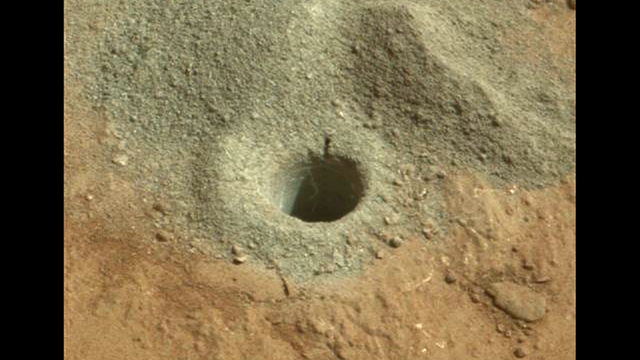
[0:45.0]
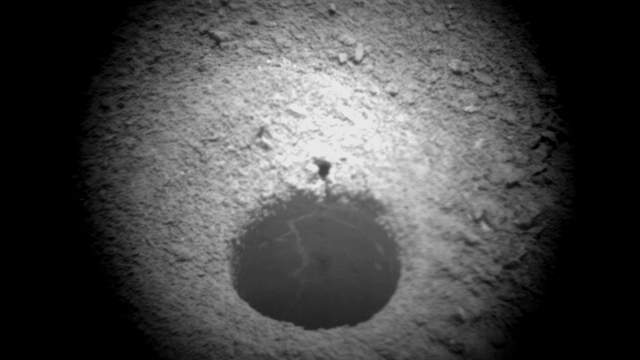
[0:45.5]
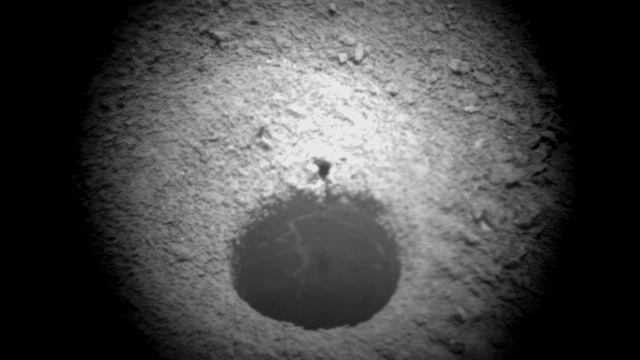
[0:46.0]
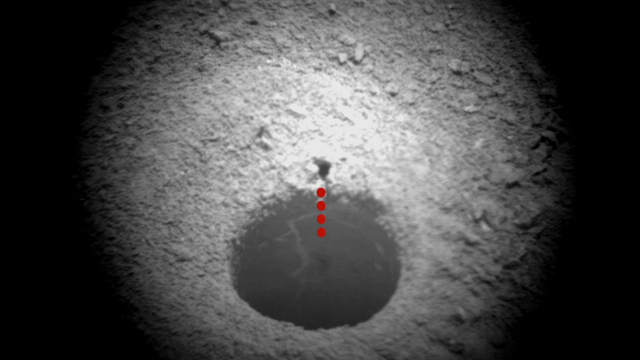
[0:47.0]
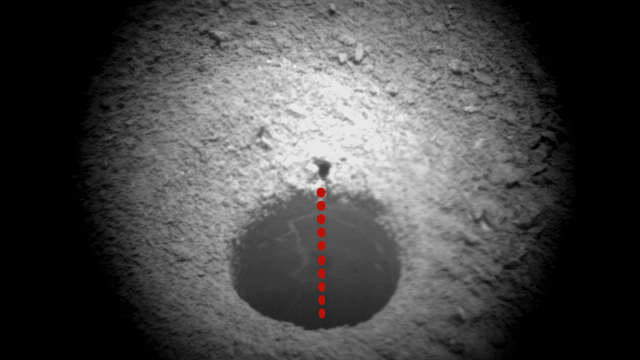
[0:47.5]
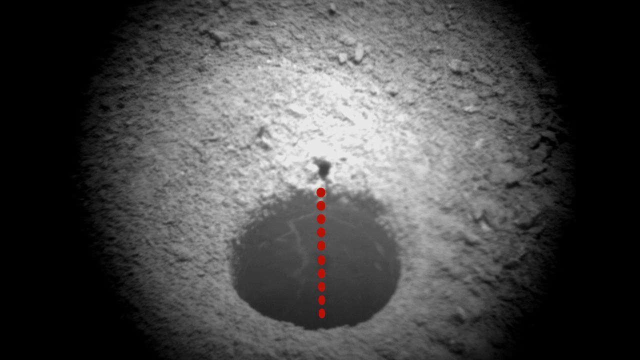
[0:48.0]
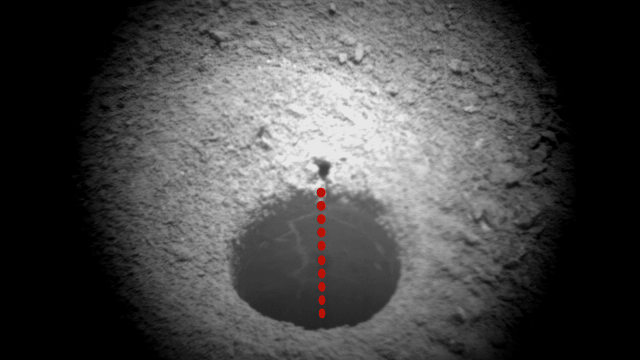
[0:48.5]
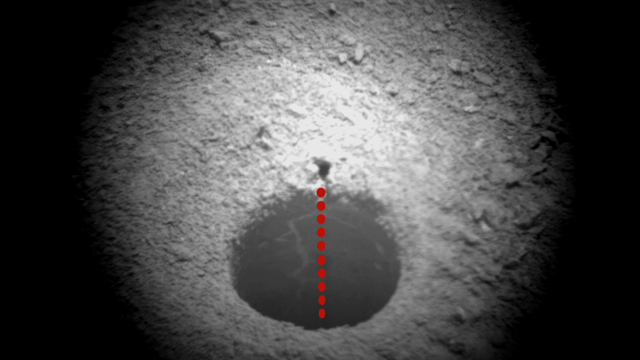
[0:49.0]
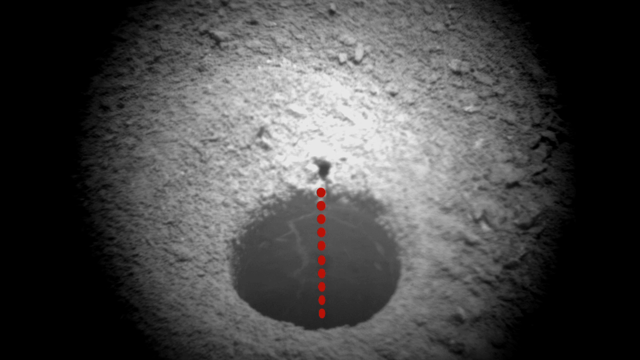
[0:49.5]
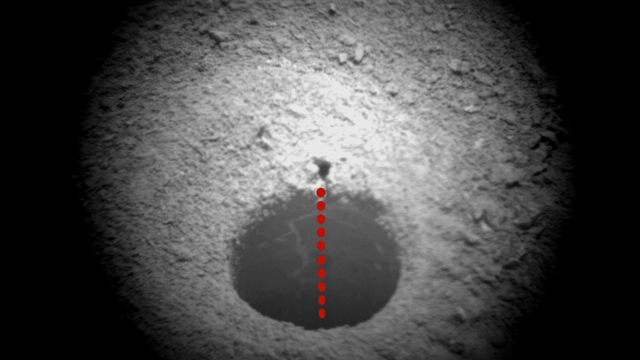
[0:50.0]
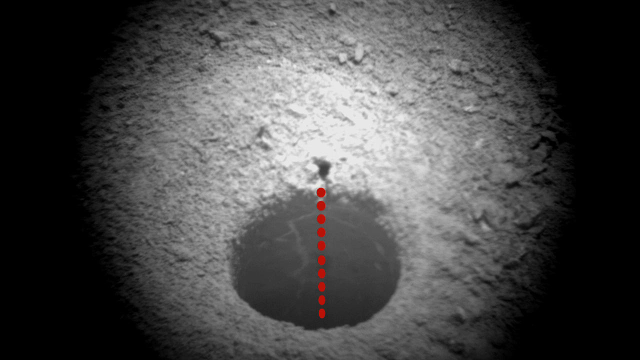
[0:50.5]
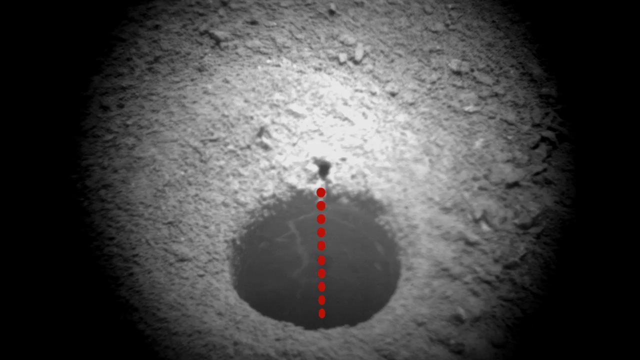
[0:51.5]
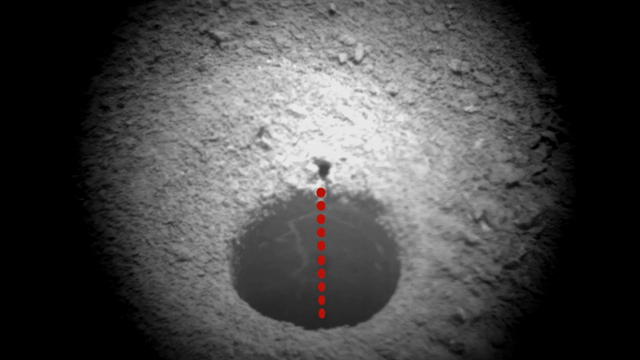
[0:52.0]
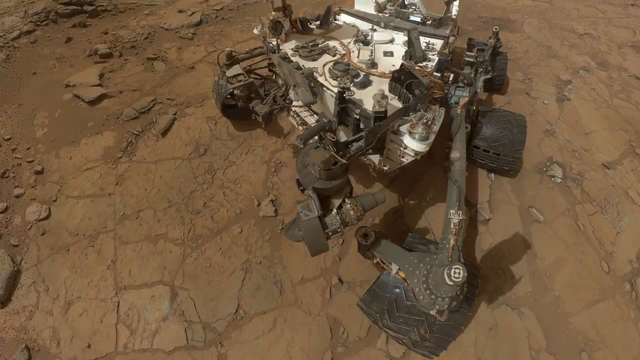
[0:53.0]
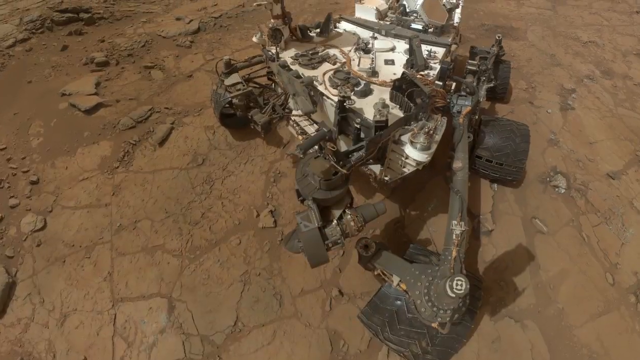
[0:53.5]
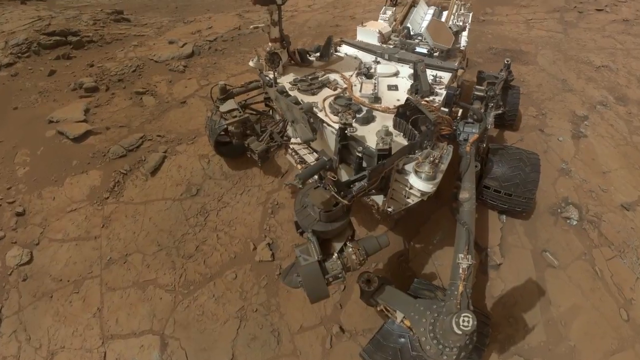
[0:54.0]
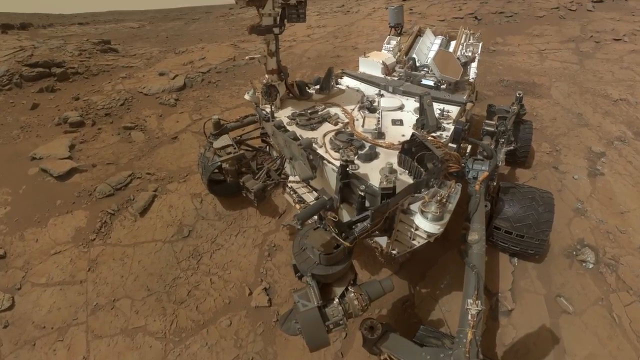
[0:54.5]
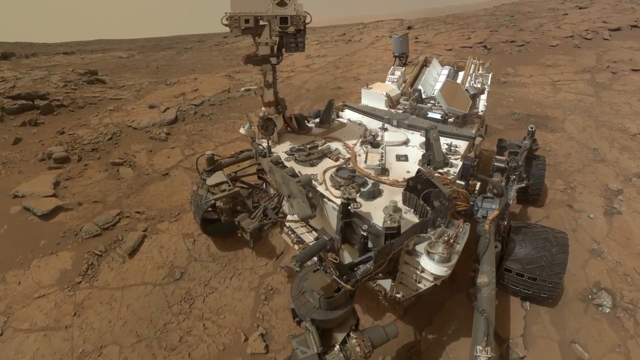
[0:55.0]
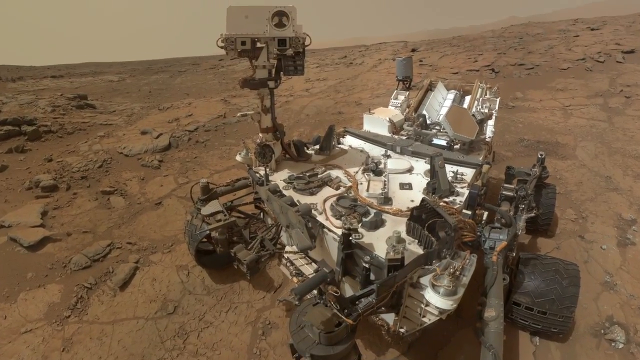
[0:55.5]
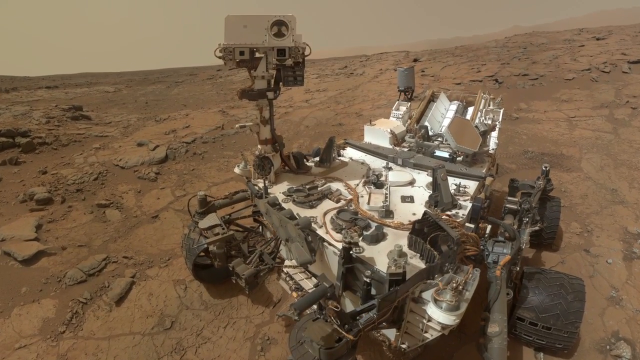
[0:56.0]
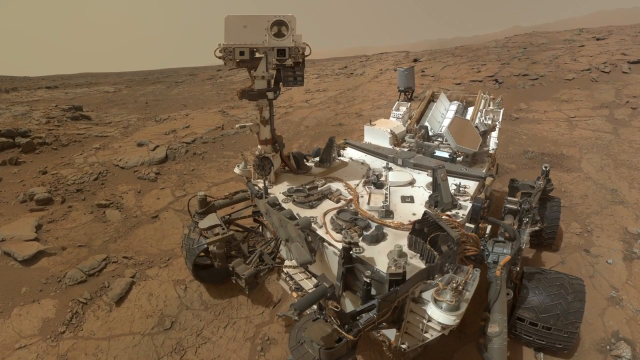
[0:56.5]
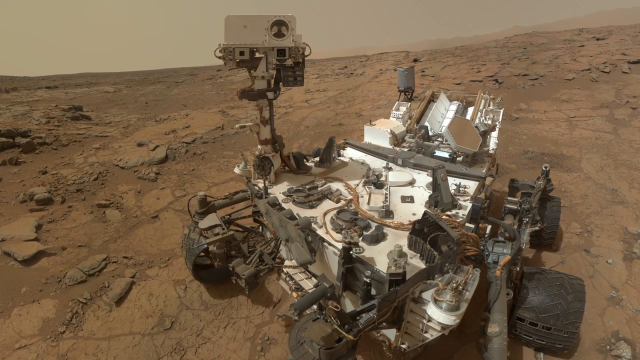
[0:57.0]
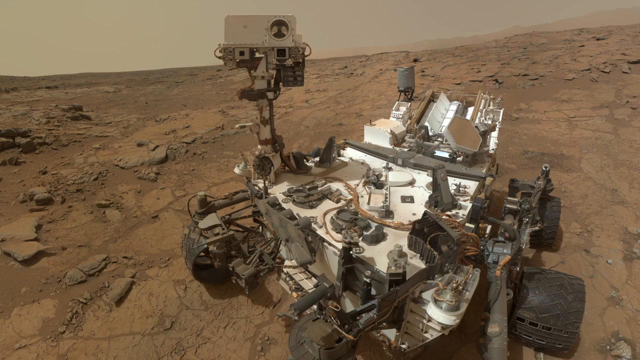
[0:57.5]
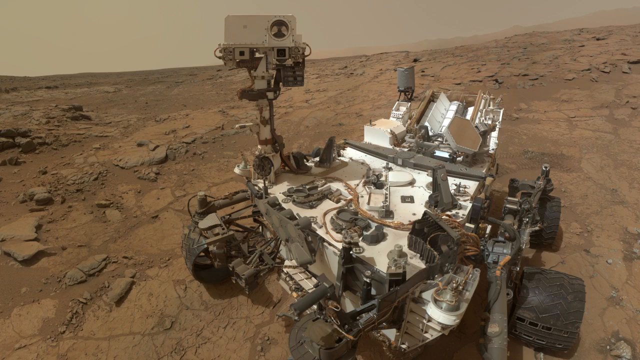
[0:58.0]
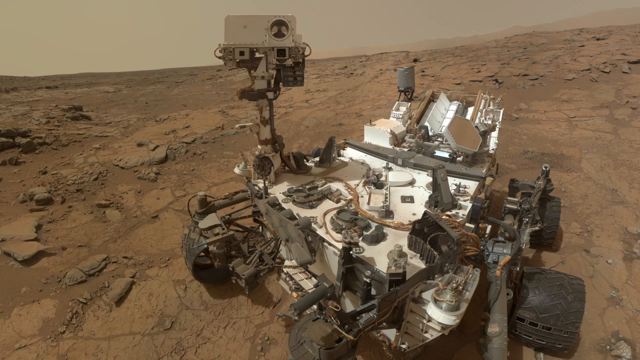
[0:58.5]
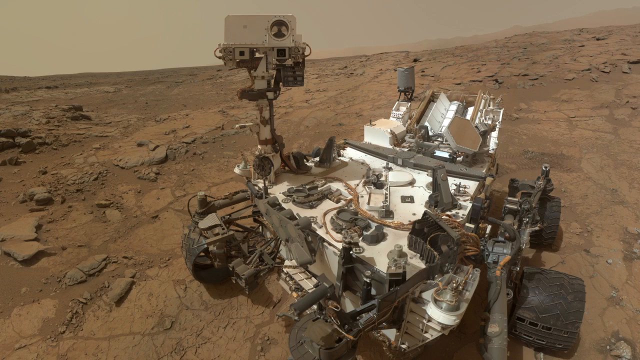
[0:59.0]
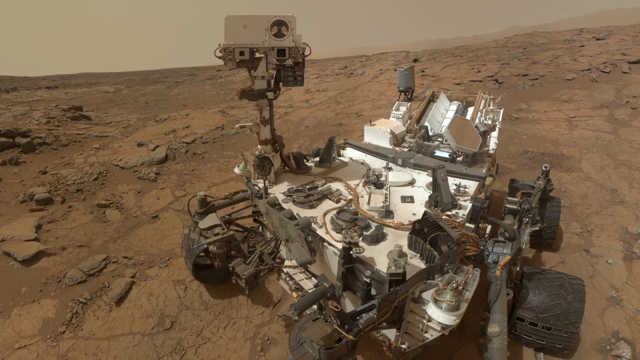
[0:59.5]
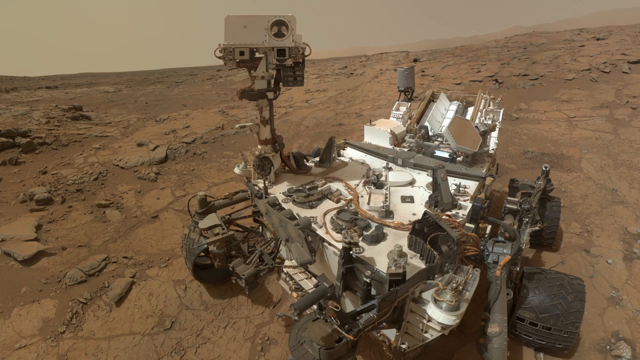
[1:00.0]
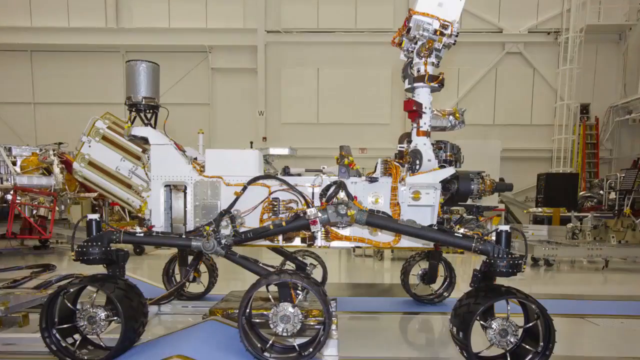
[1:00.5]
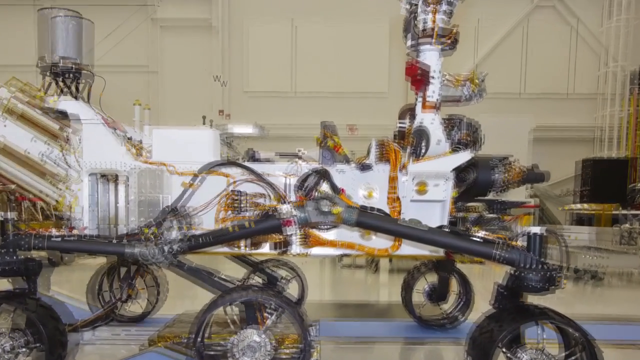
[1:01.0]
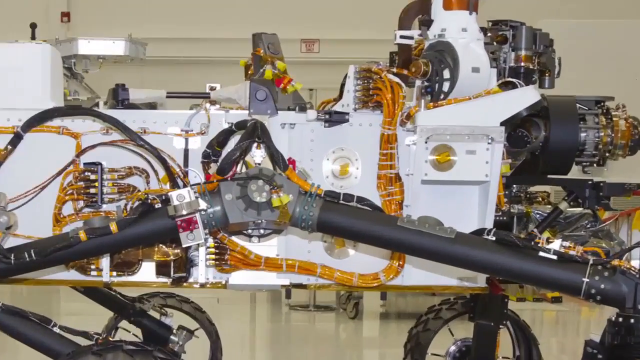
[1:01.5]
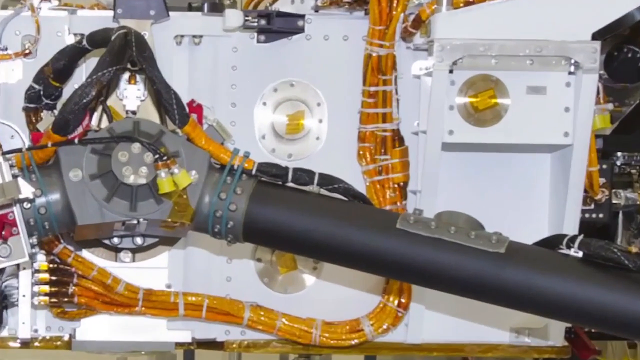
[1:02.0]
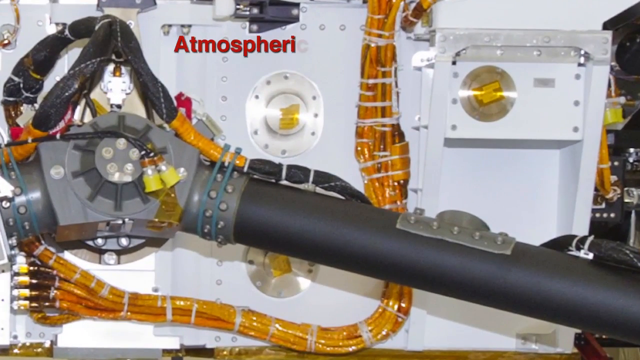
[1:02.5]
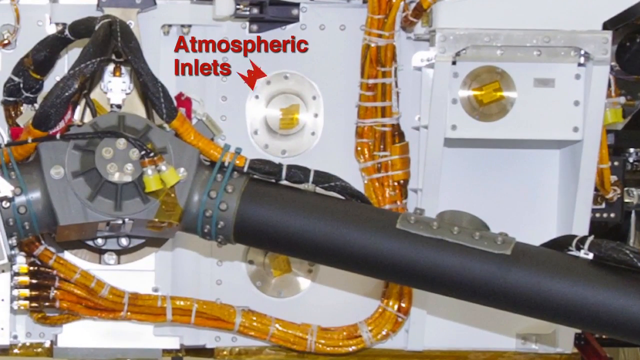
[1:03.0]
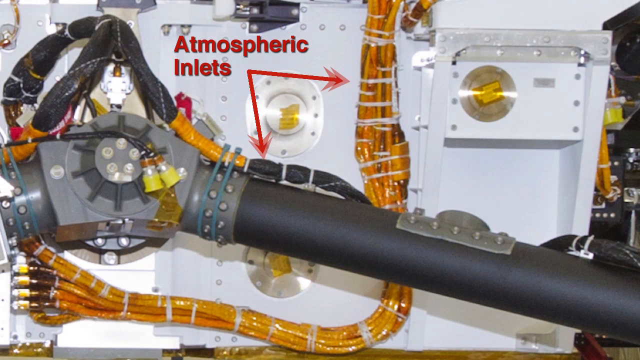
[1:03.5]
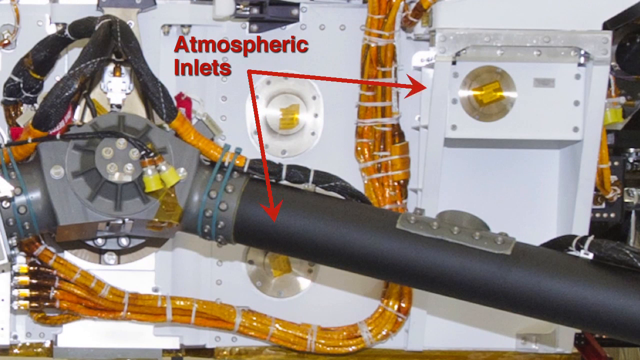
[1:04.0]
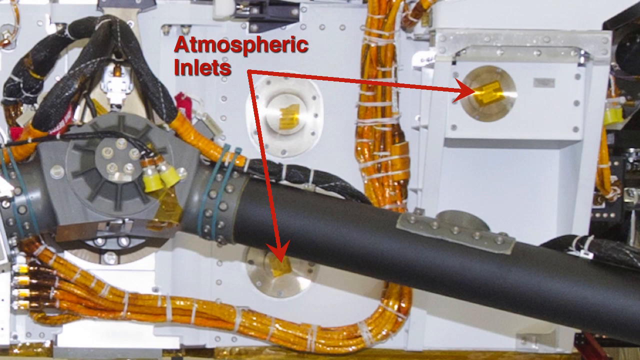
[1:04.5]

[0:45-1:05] A hole on the surface of Mars appears, looking reddish. The scene immediately switches to a black-and-white image of a hole with a light shone on it and what looks like dirt or soil around it; it seems to be dark outside. Red dotted lines appear on the screen, going across the diameter of the hole. The scene then switches to daylight, showing the whole rover on the surface of Mars with red dirt. A close-up of the rover shows the camera seen earlier, now attached to the rover, along with the rover's many wheels, the top of the rover and all the wiring on it. Another shot from the side of the rover follows, this time apparently in some facility, with text reading "Atmospheric Inlets" and two arrows going from the text to two different parts of the rover.